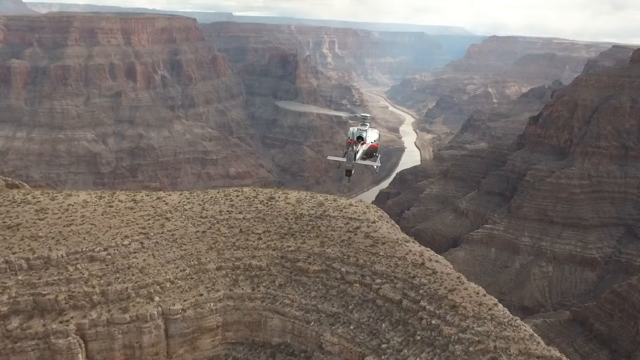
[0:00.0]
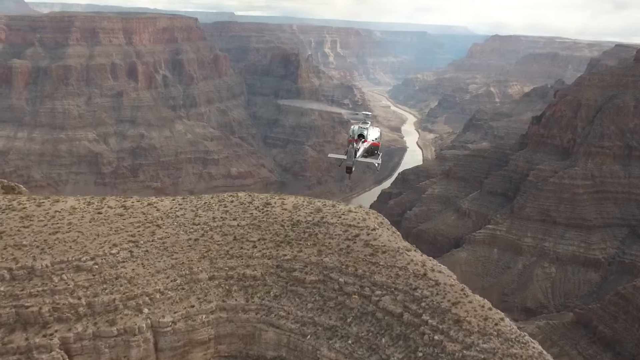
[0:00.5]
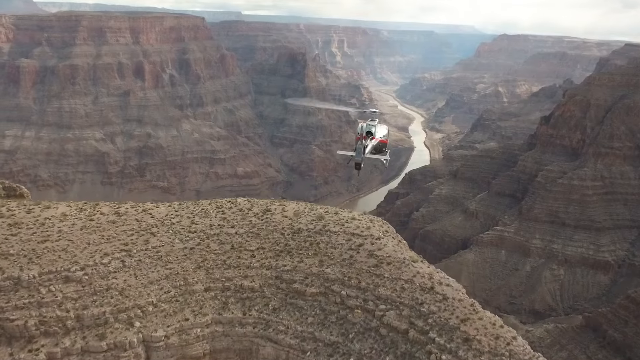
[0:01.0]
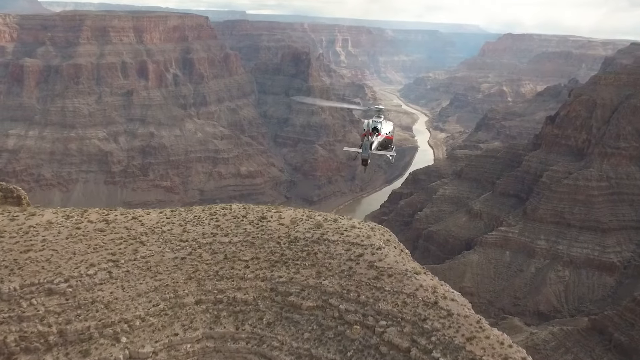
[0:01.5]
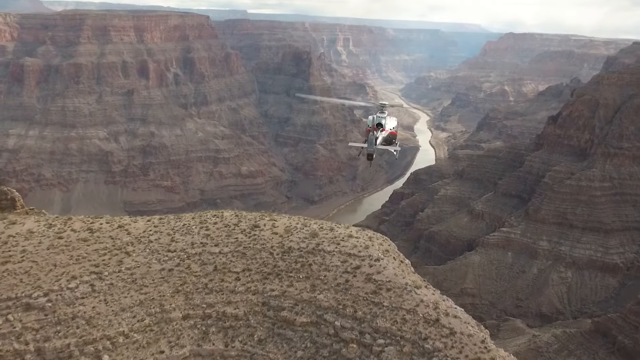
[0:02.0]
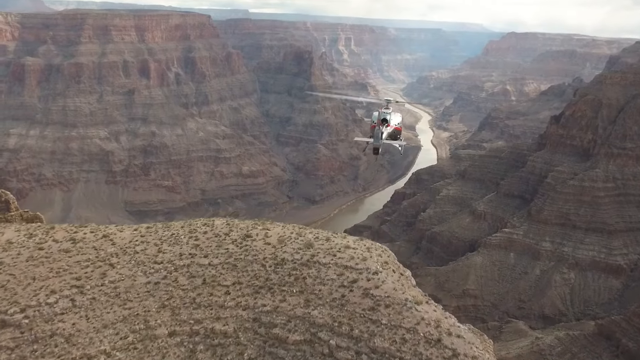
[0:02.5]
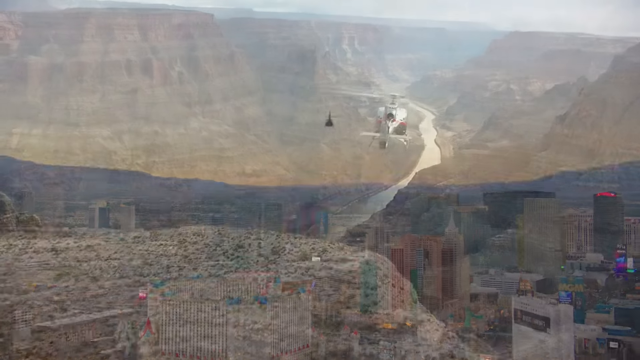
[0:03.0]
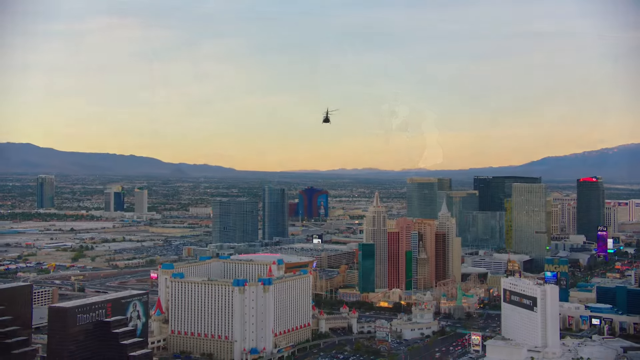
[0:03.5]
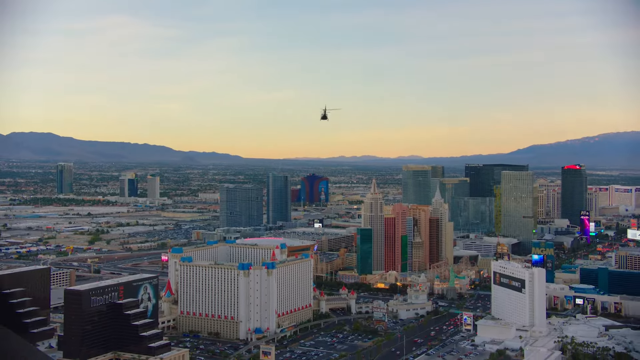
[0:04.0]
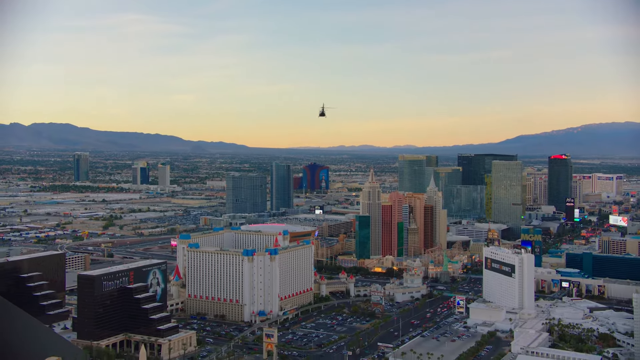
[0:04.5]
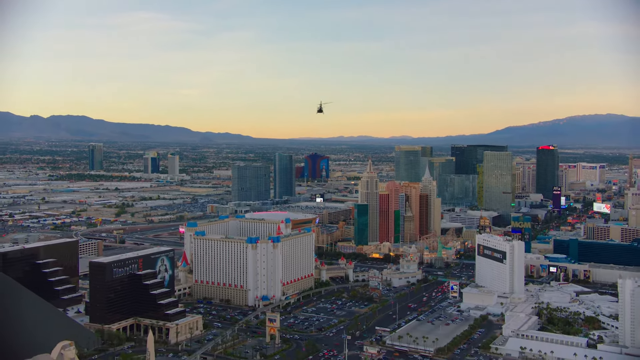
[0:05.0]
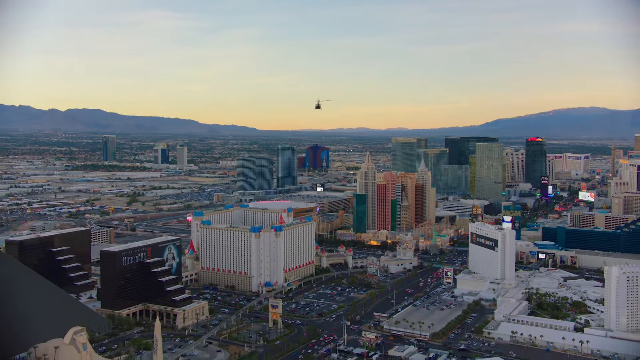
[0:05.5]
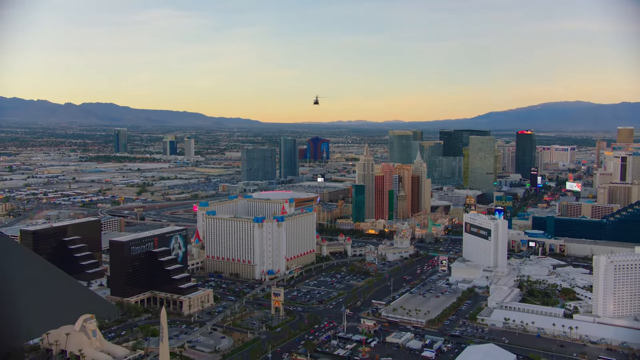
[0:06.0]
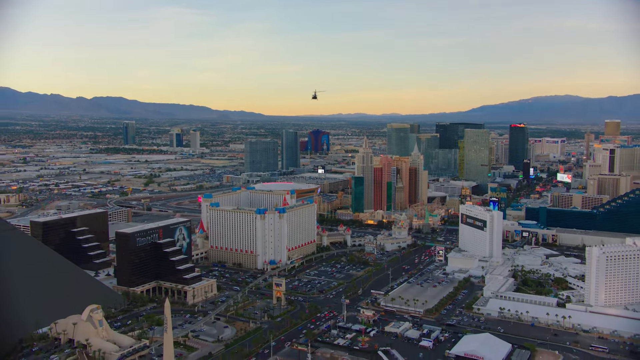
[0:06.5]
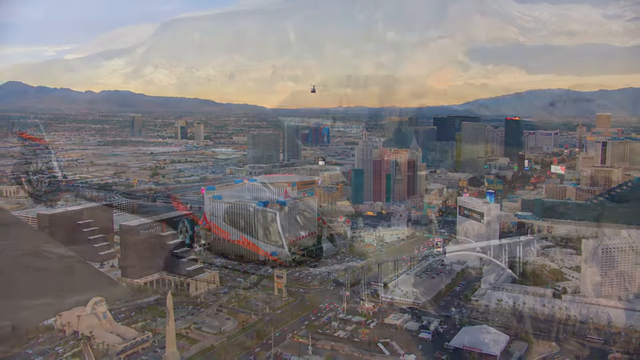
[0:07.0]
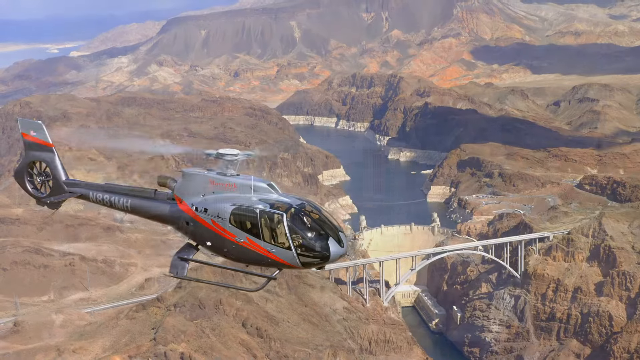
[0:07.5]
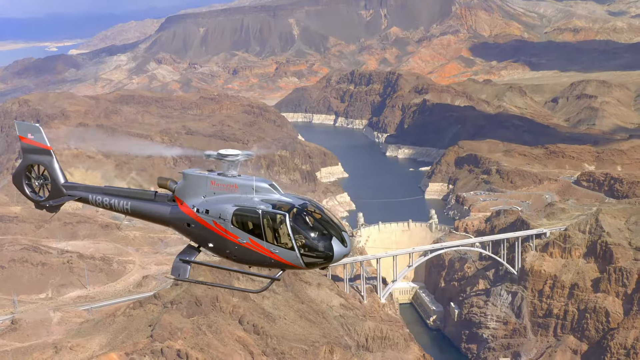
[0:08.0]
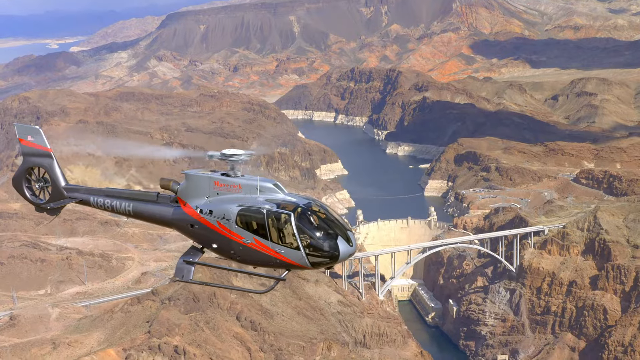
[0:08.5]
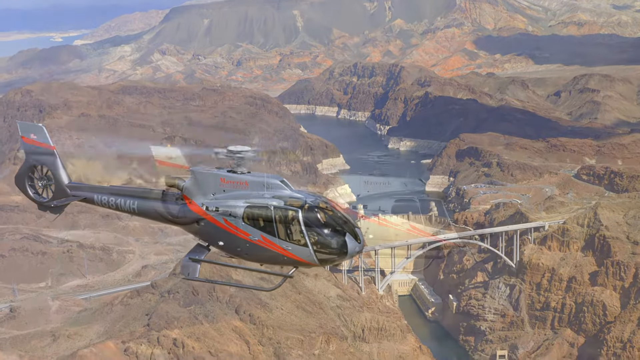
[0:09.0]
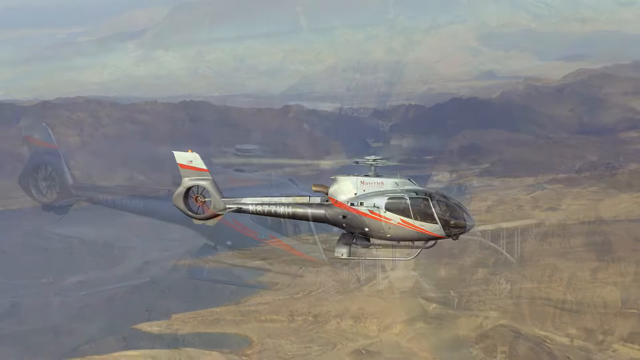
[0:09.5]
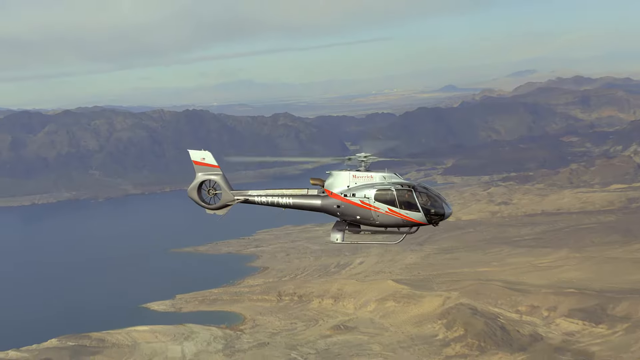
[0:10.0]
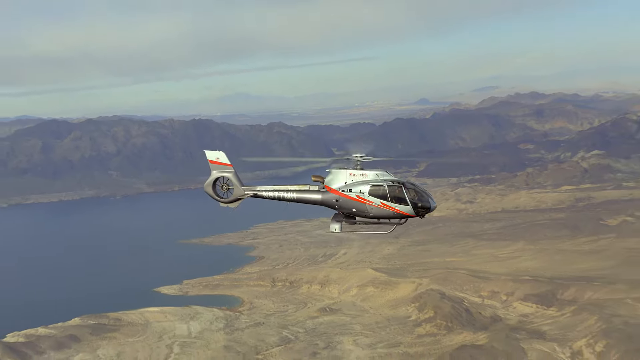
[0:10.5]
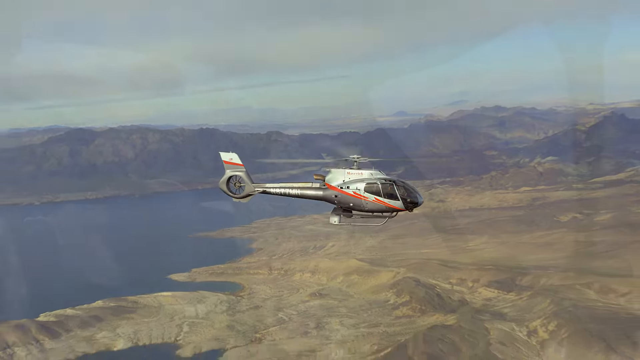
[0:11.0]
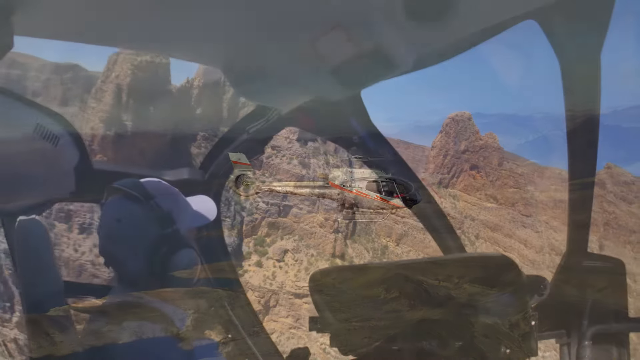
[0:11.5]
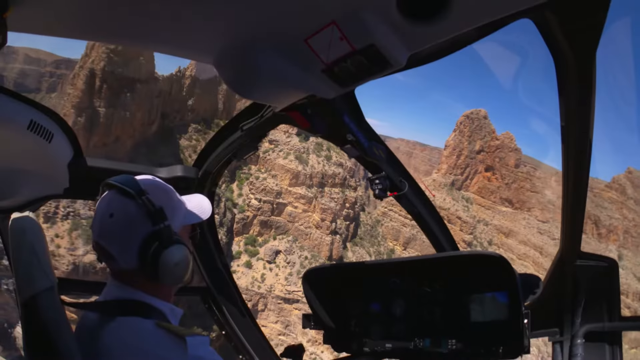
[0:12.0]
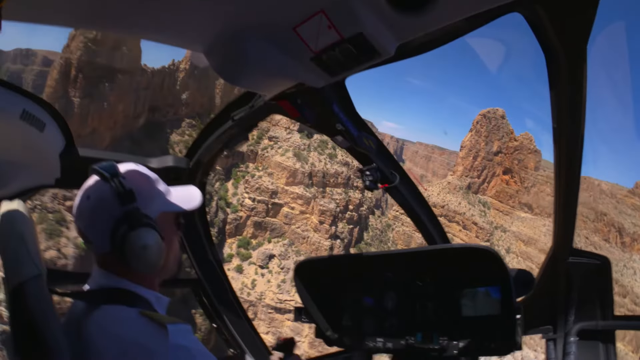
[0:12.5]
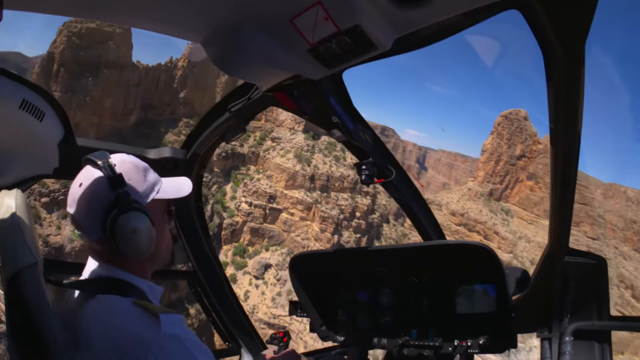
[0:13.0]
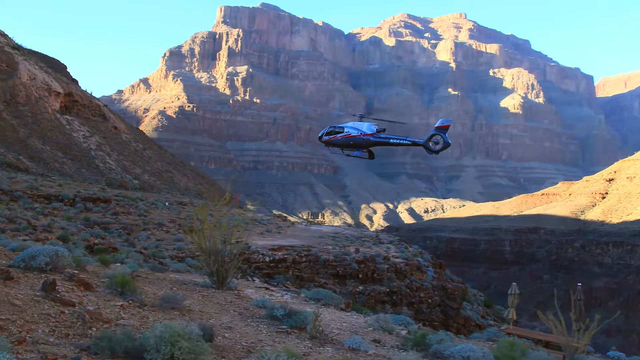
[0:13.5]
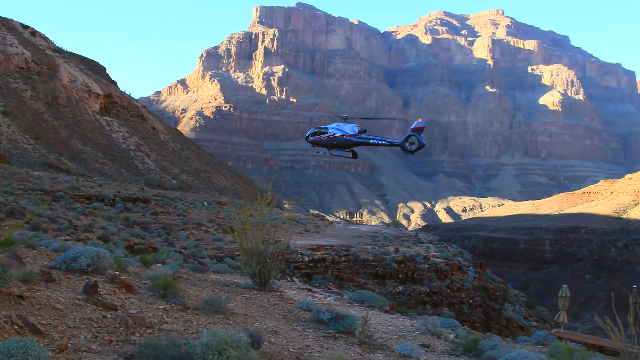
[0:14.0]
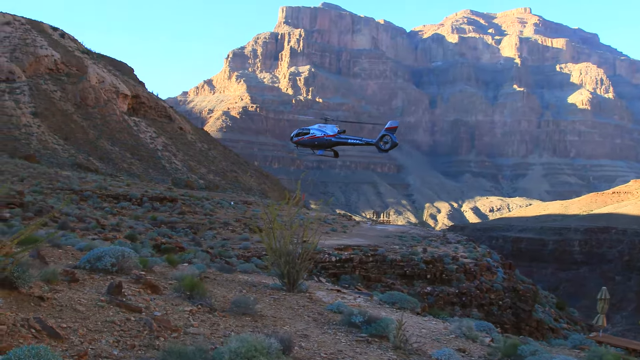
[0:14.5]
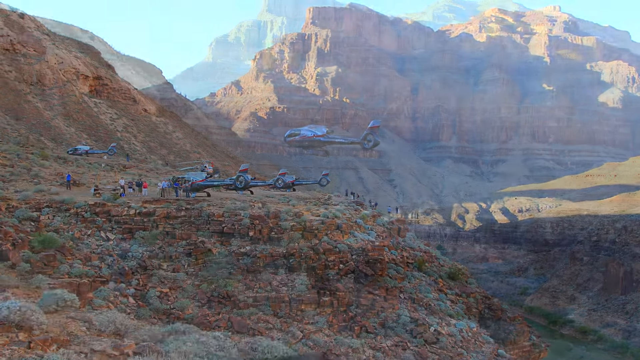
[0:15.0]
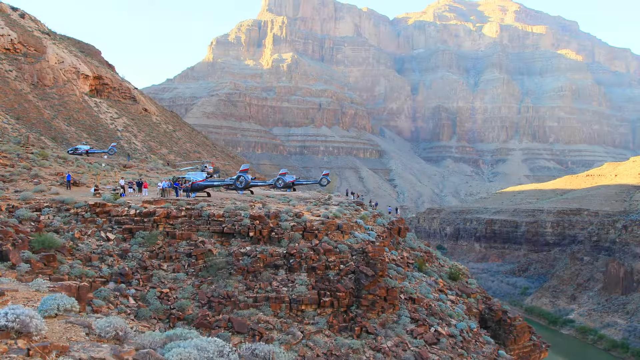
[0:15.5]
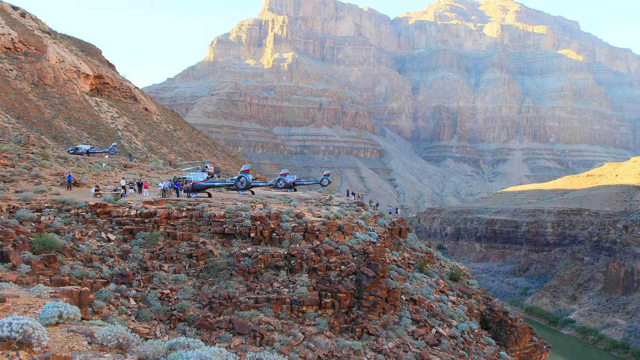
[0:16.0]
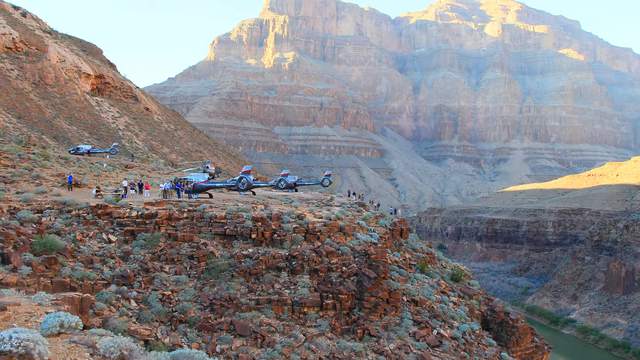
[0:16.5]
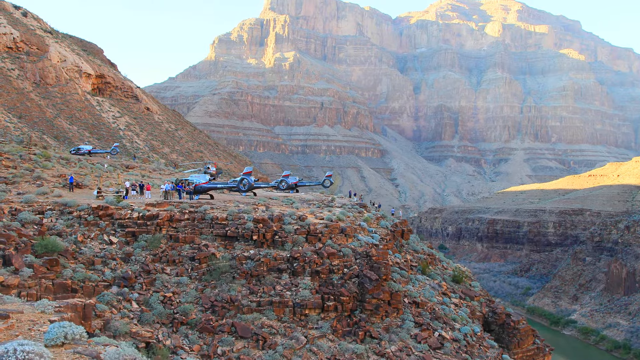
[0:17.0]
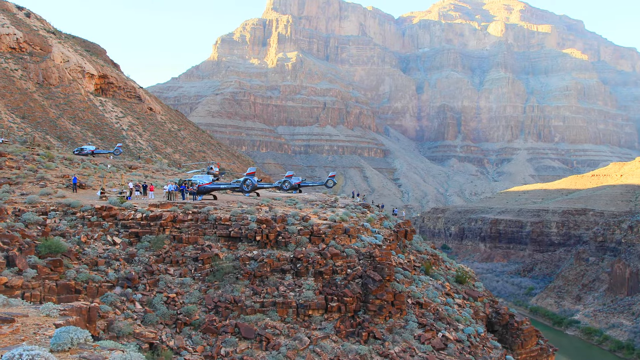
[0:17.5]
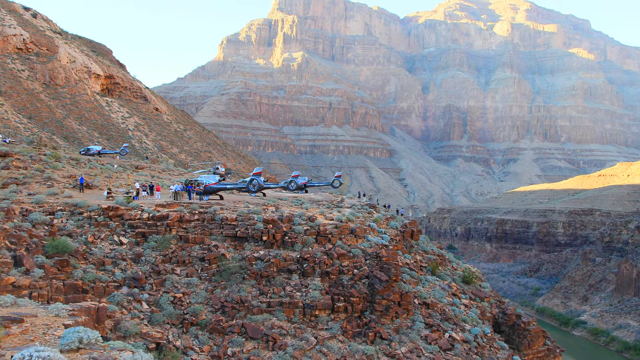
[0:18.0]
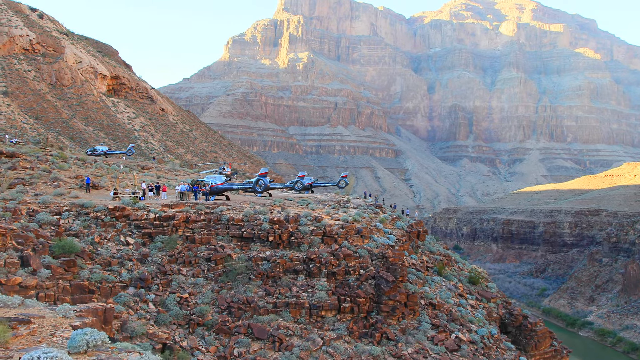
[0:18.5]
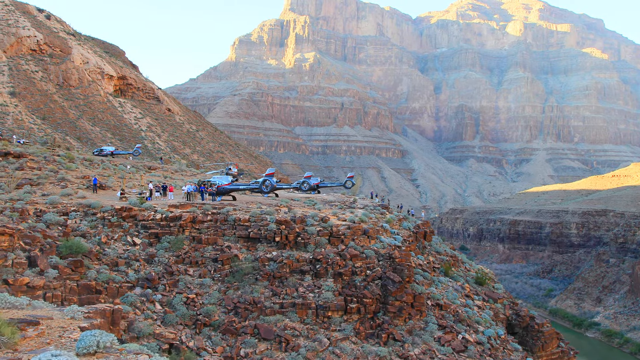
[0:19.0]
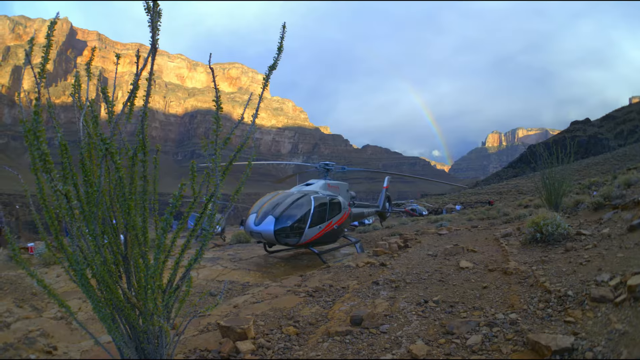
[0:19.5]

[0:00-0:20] A helicopter tour of the Nevada desert area near Las Vegas begins with a helicopter flying over the Colorado River, then over the Las Vegas Strip with all of its hotels. The helicopter passes by Hoover Dam and Lake Mead and travels through a canyon, maybe the Grand Canyon, whose structure shows different erosions. The helicopter is very modern, silver with an orange trim, and looks comfortable. A view of the pilot seat in the cockpit appears. A helipad has two or three helicopters on it. The helicopter flies over the canyon, the city of Las Vegas, Hoover Dam and the lake and its surrounding scenery. It is shown flying quickly but getting in close, so the different geological structures are clearly visible.